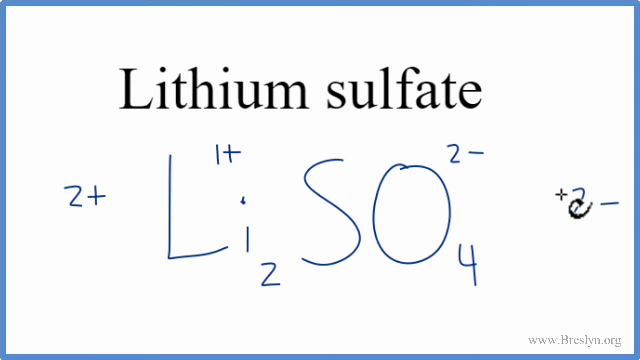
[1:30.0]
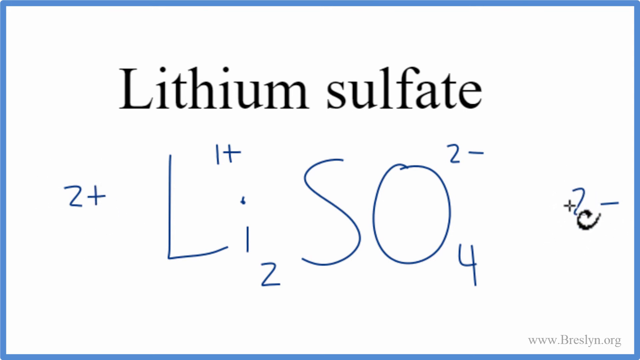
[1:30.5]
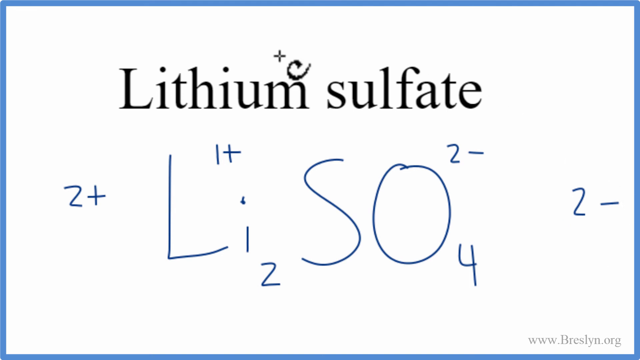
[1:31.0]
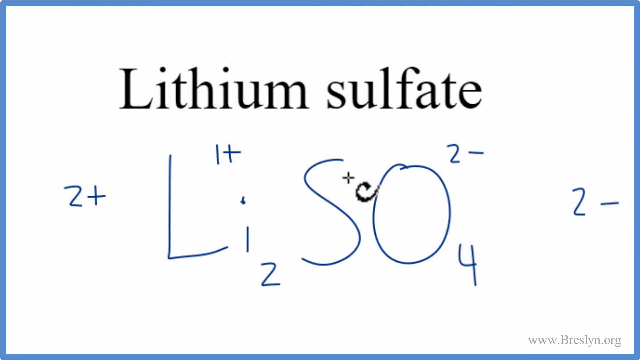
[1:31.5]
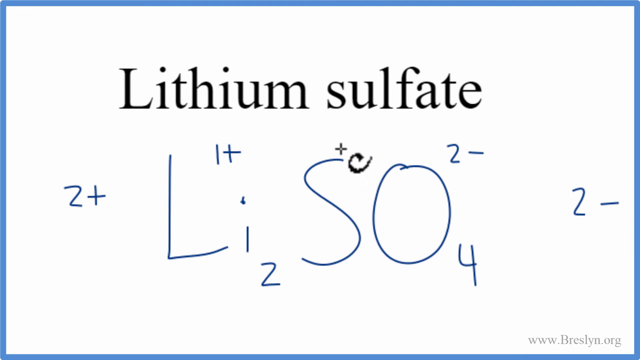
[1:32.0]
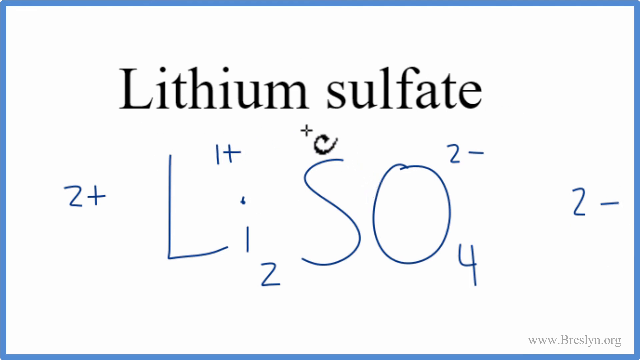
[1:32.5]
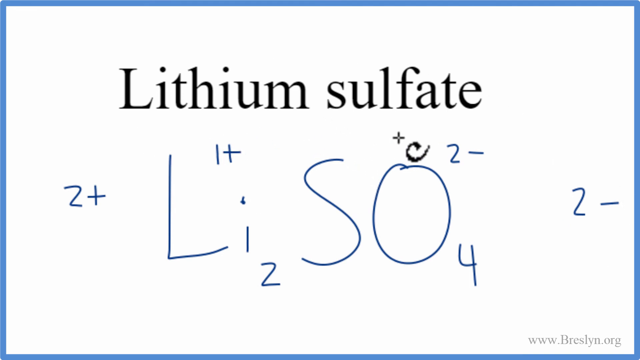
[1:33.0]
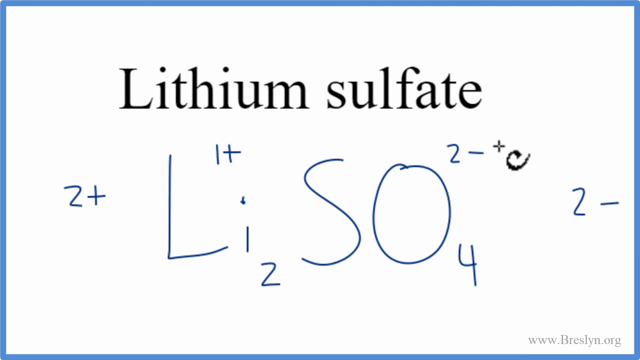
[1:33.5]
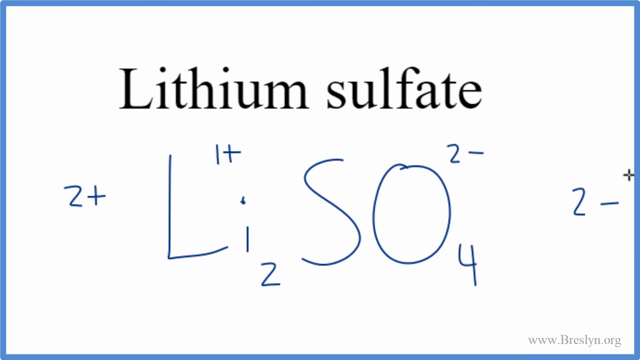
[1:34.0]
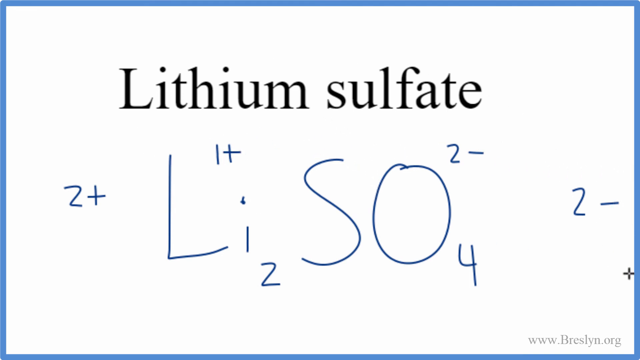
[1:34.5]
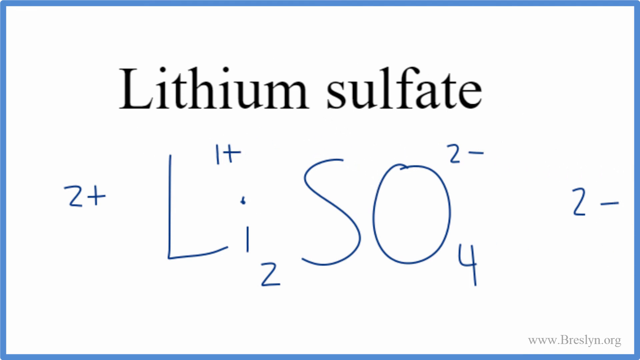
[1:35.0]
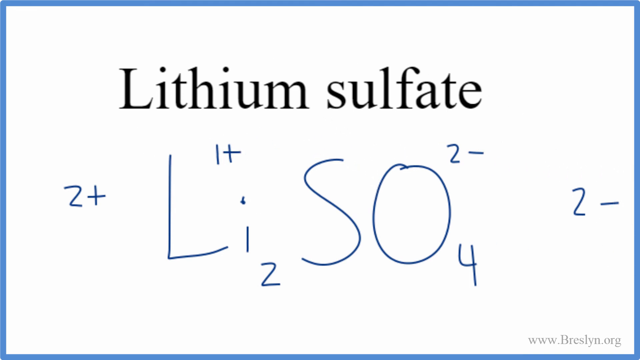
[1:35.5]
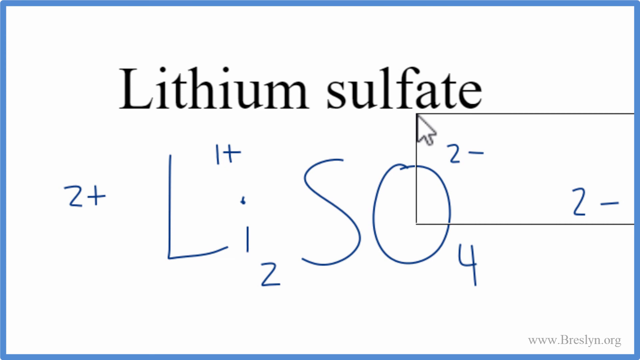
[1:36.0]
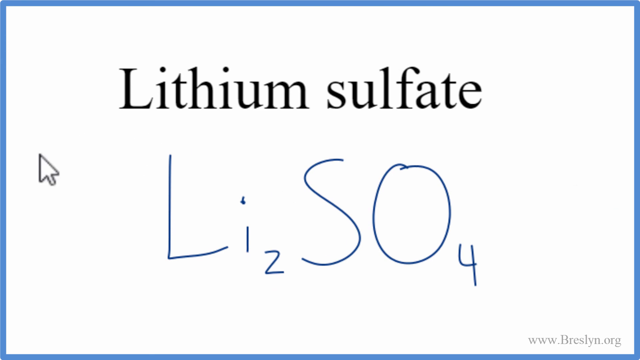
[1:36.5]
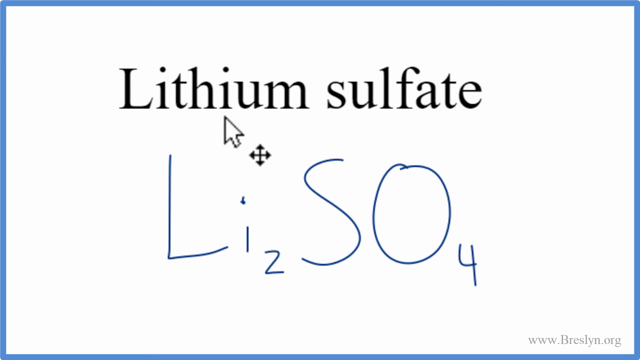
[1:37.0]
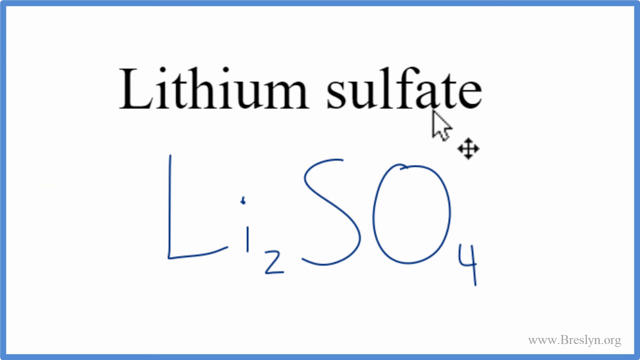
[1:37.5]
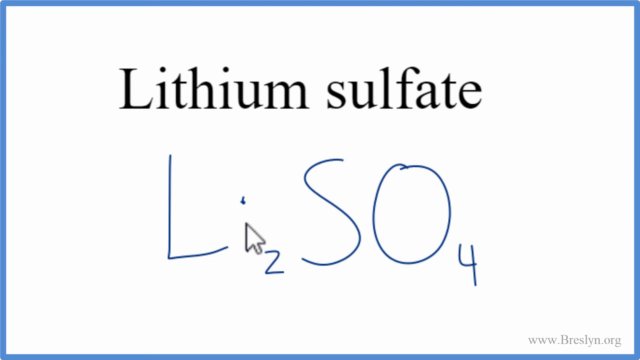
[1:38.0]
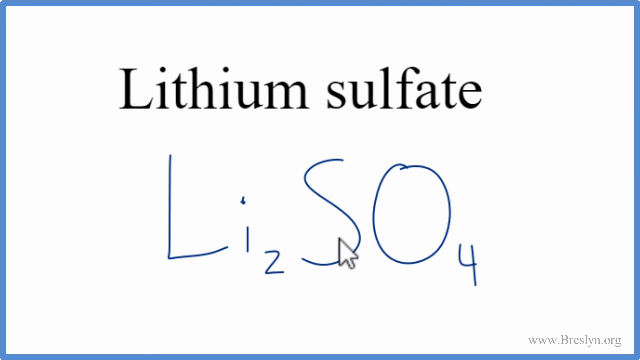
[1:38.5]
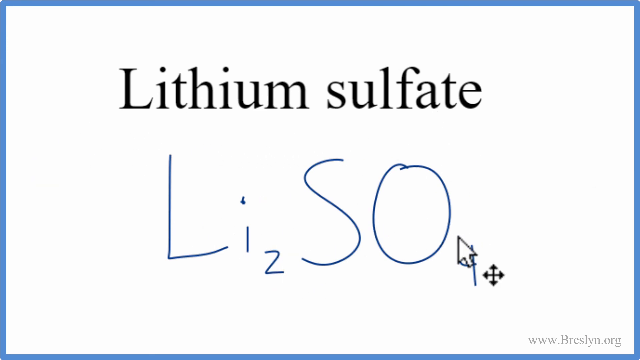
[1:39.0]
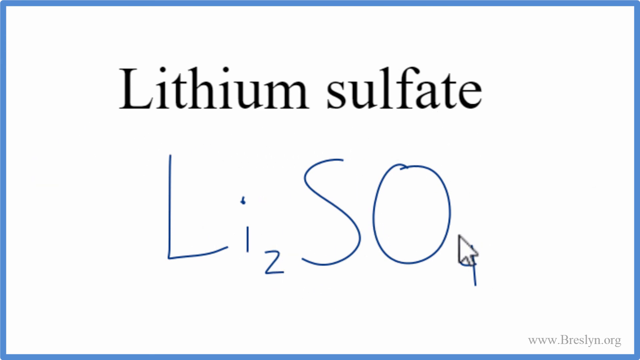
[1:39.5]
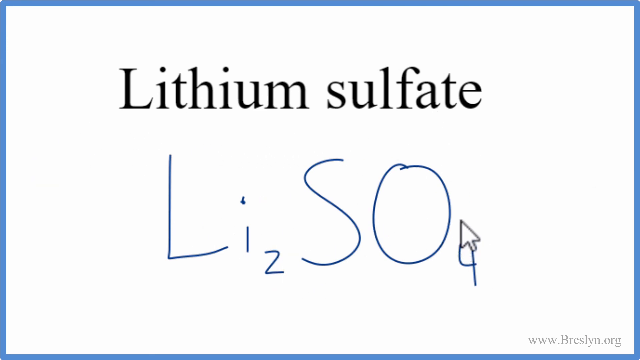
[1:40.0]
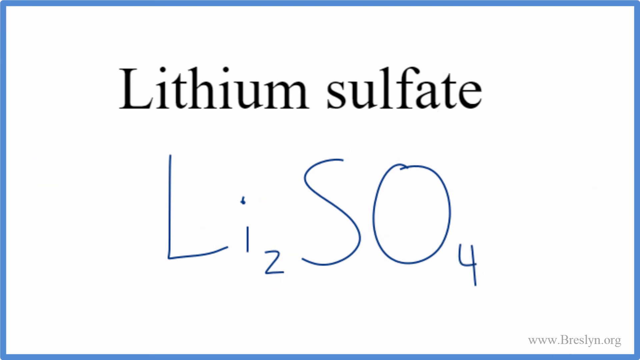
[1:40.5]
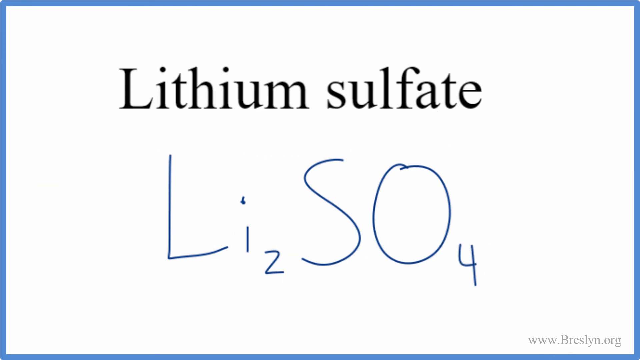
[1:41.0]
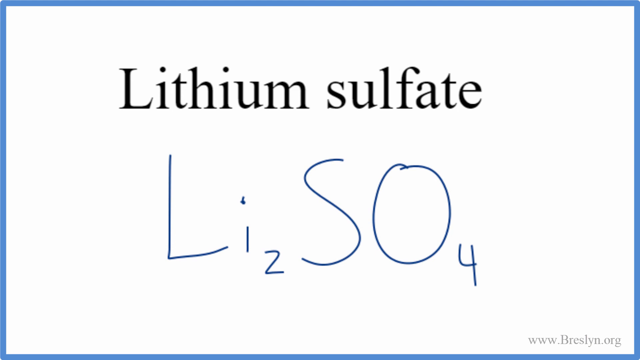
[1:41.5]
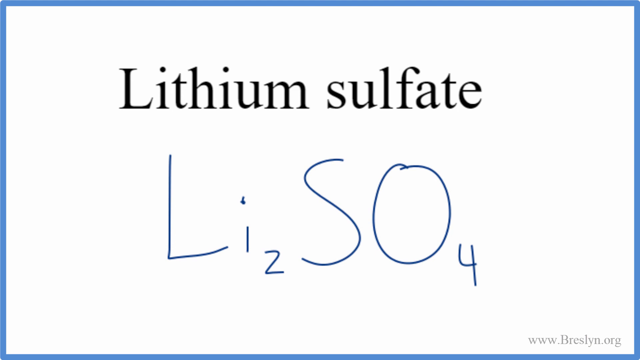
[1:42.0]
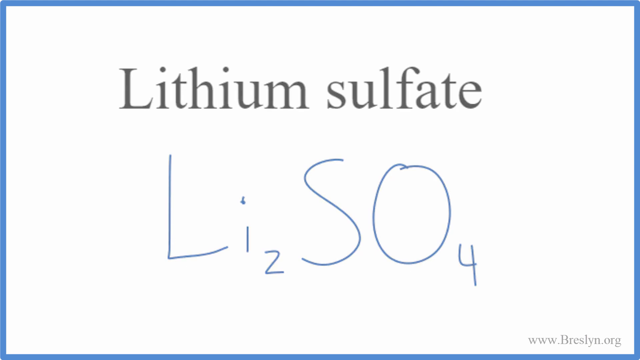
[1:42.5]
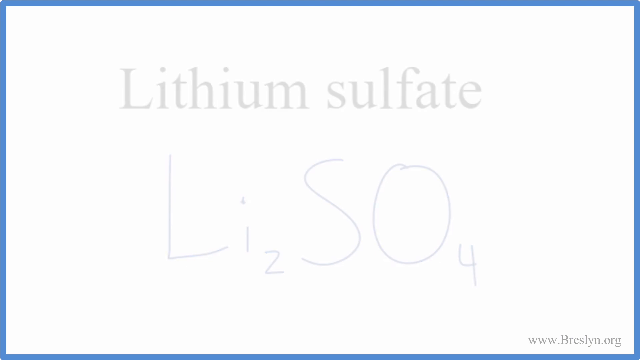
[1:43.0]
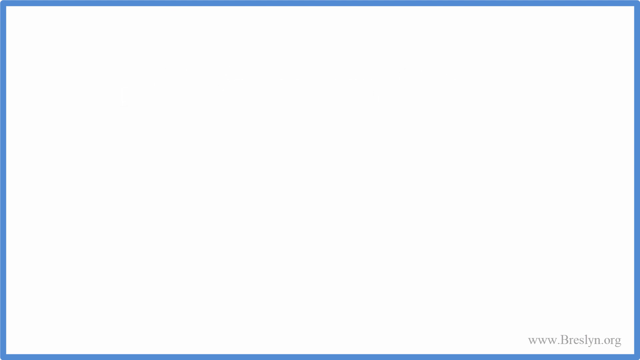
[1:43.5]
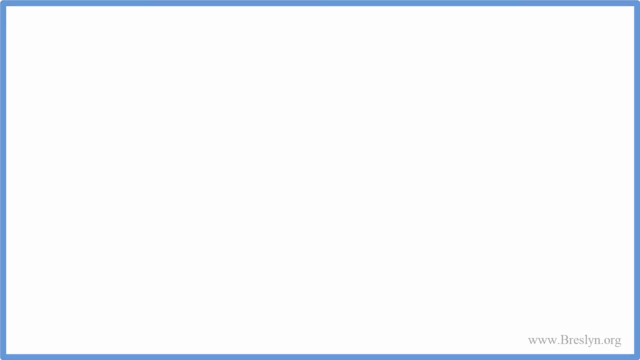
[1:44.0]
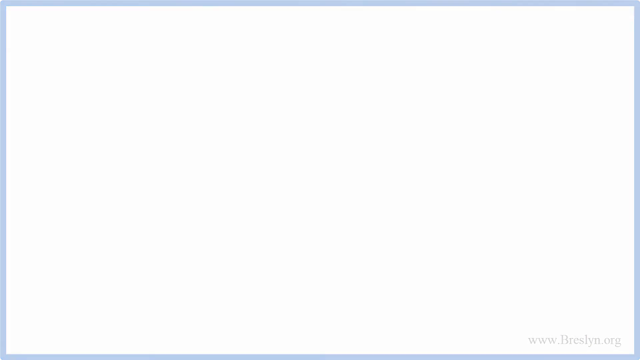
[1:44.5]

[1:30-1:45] Lithium sulfate is written out as 2 plus Li, 1 plus, with a 2, SO4. All of the extra symbols are then erased, leaving just Li2SO4.